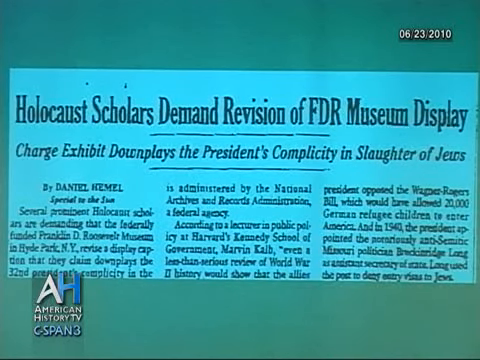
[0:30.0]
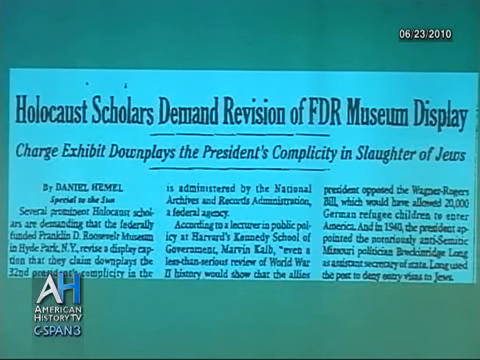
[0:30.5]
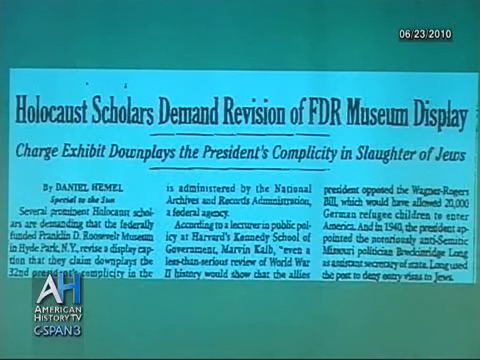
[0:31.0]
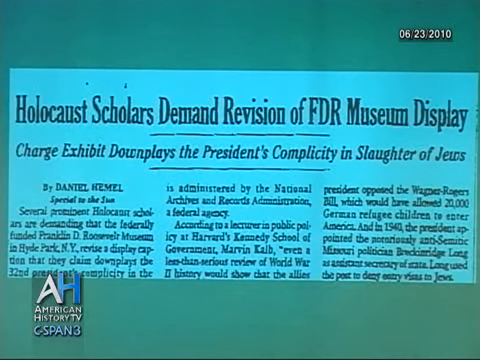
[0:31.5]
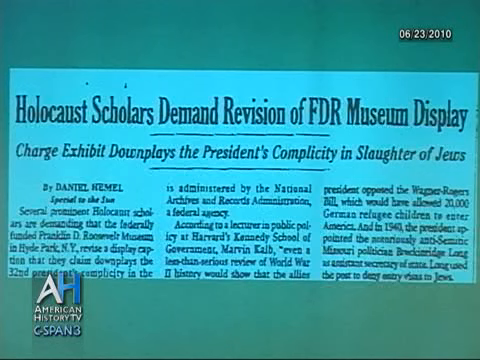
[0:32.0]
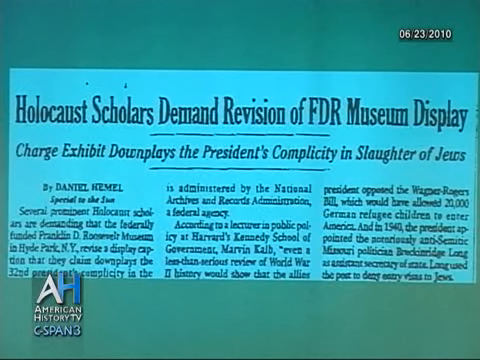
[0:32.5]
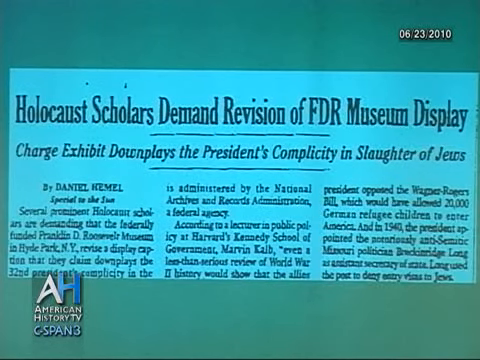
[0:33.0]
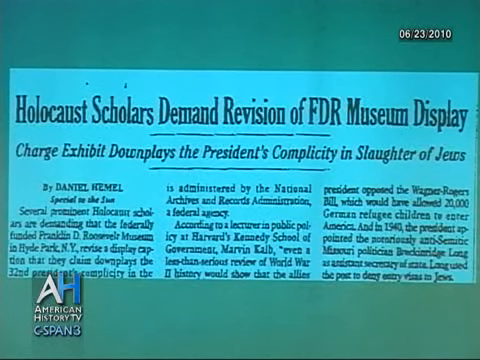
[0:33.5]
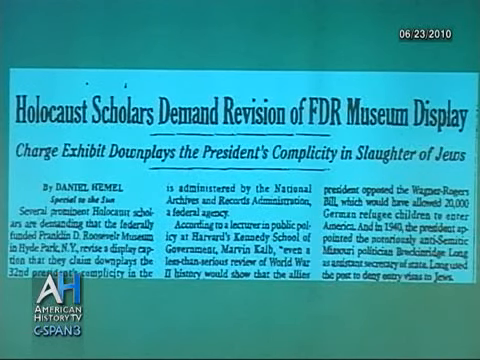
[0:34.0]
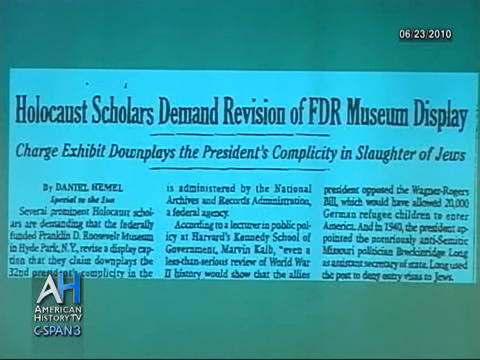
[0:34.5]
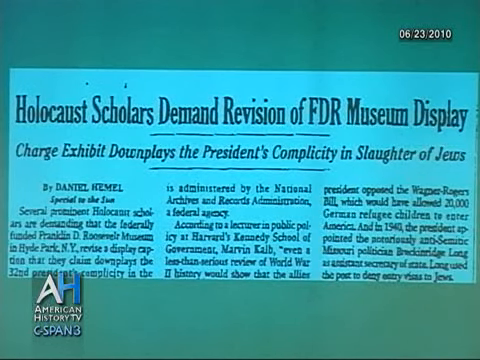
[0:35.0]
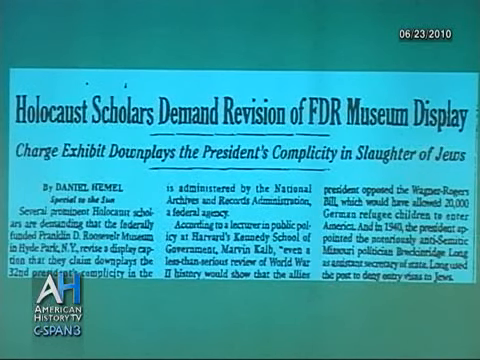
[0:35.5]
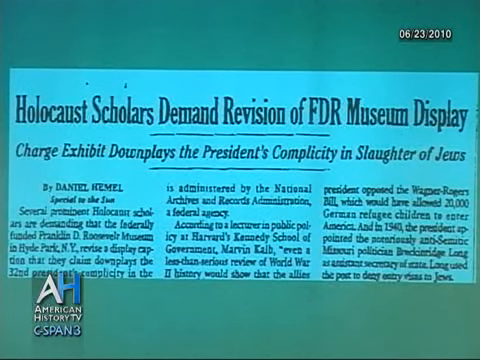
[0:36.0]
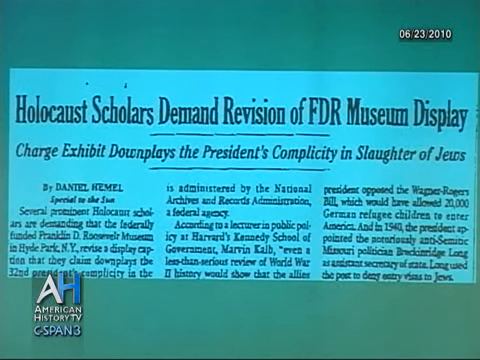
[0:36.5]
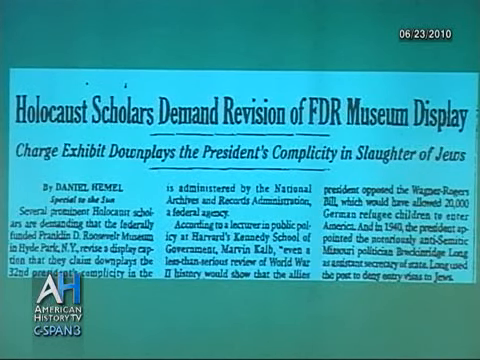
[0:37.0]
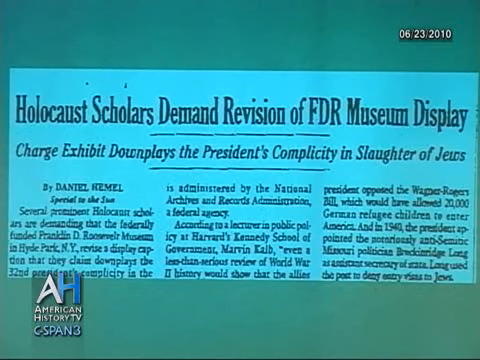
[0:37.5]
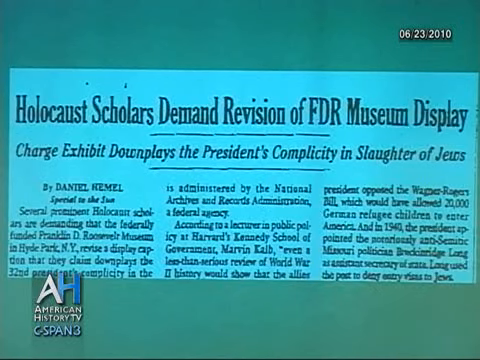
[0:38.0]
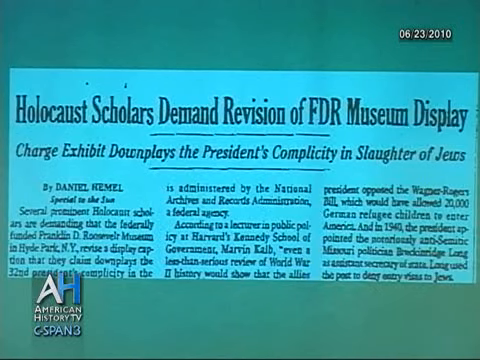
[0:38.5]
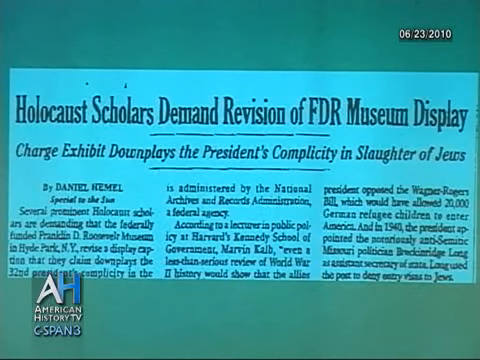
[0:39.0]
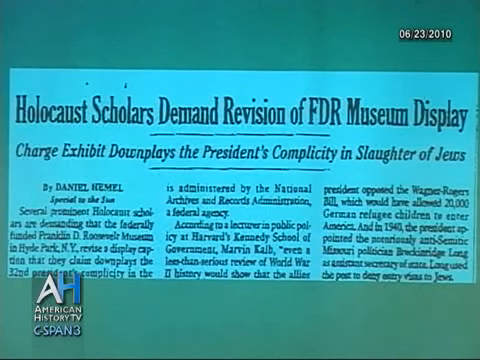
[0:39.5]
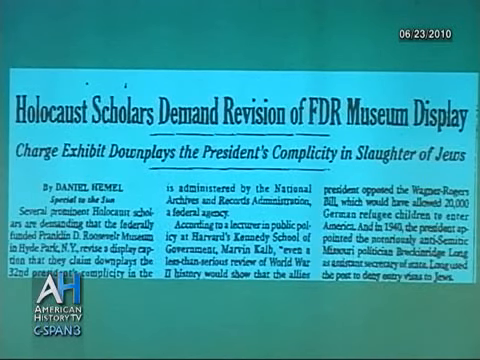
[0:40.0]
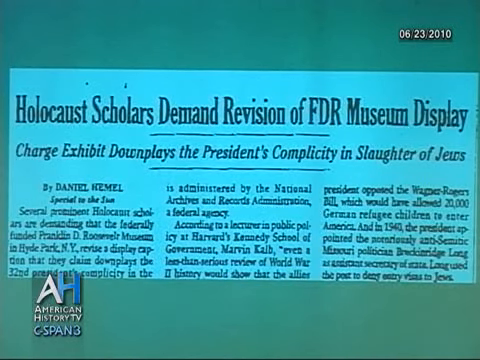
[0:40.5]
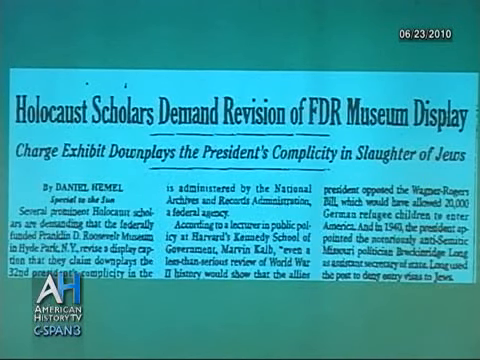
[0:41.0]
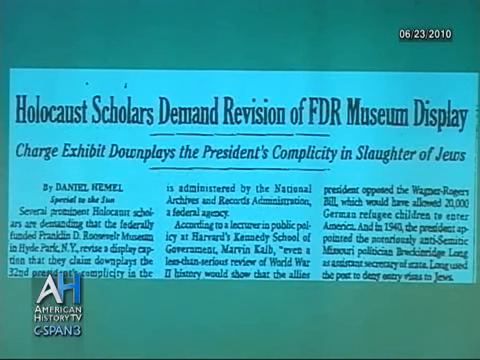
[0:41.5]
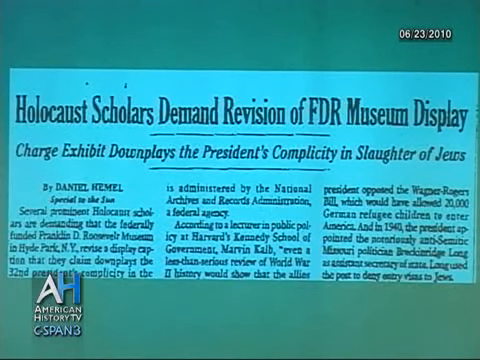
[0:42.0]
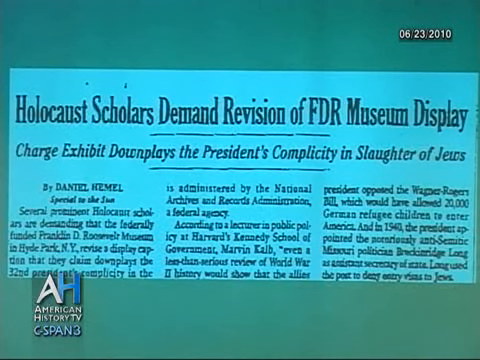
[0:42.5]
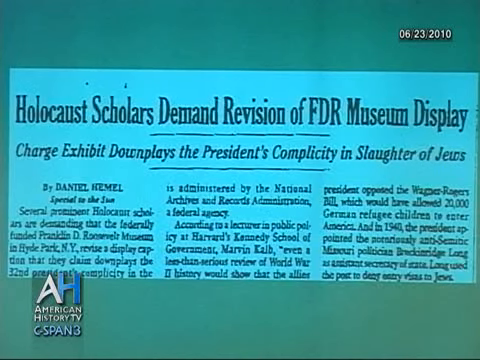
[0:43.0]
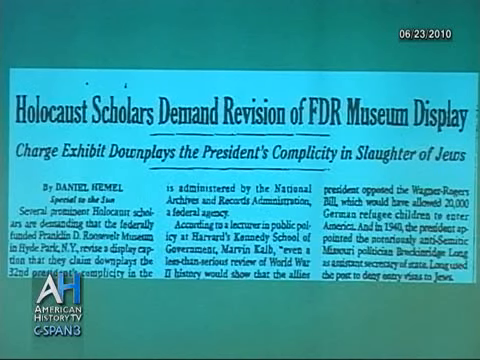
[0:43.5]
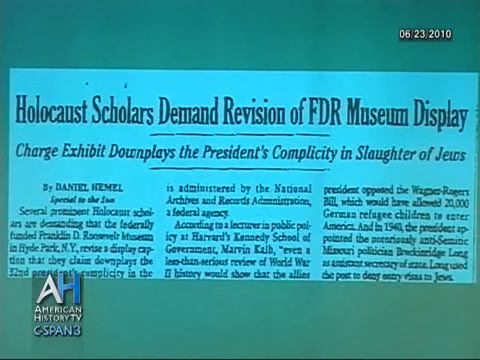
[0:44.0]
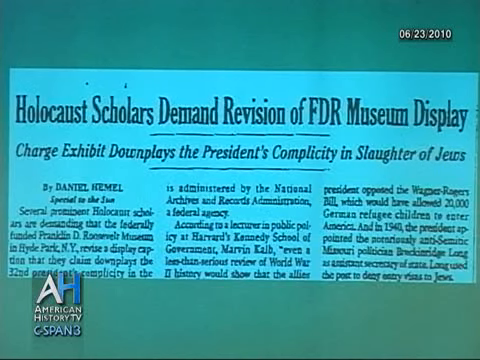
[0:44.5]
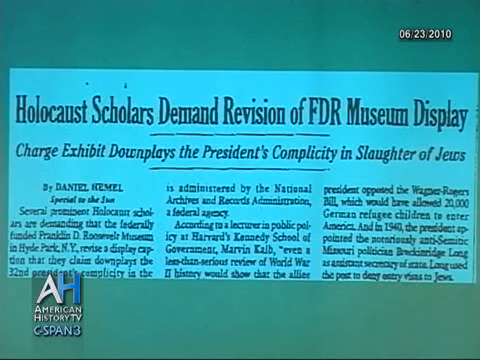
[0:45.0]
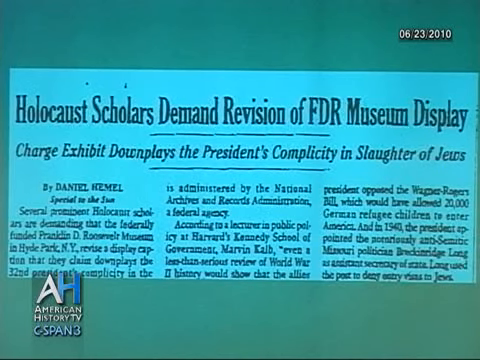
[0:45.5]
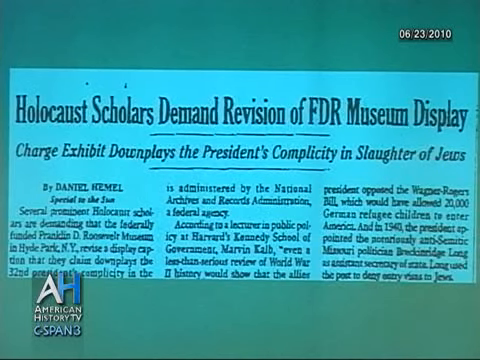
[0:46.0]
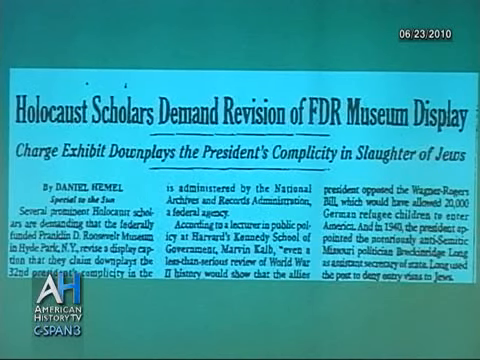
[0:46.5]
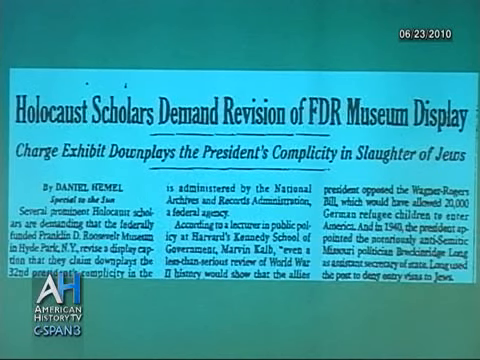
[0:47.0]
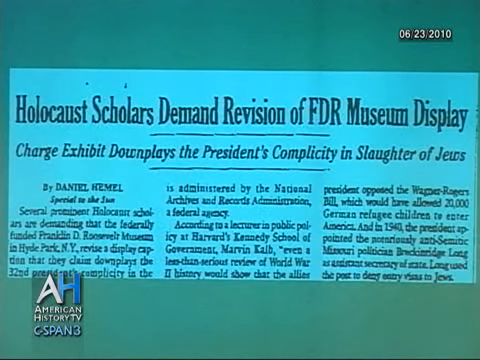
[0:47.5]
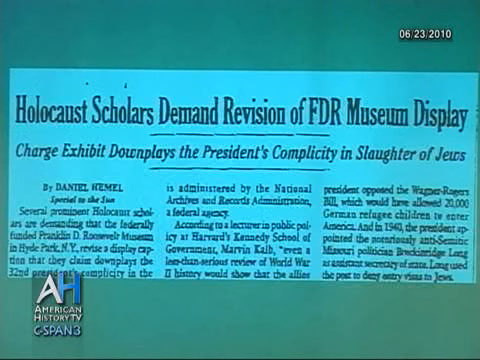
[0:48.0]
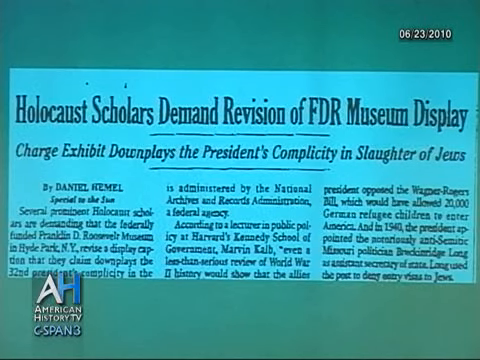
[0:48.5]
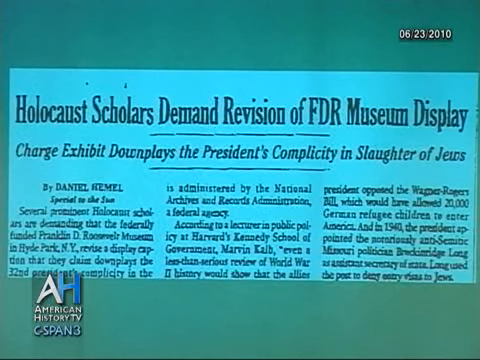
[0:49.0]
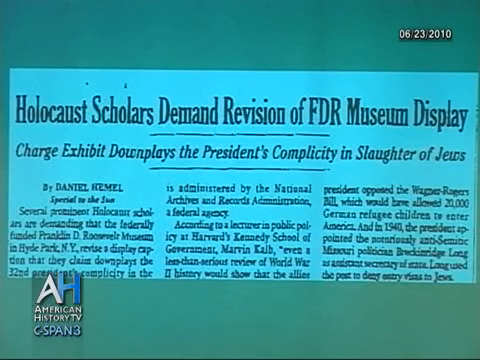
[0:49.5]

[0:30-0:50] The shot holds on the newspaper article, which looks like it may be projected on the screen seen earlier. It has a kind of greenish tint, and the background is an even more drab green. The first sentence of the article begins "Several prominent Holocaust scholars are demanding that the federally funded Franklin D. Roosevelt Museum in Hyde Park" and continues. The article has three columns of paragraphs, cut off at the bottom so the entire article cannot be read. The American History logo in the lower left has a white A and a light blue H on top, with "American History TV" beneath it in white and apparently "C-SPAN 3" beneath that. The same date, 06/23/2010, is still in the upper right. The image is static, with no action on the screen at all.